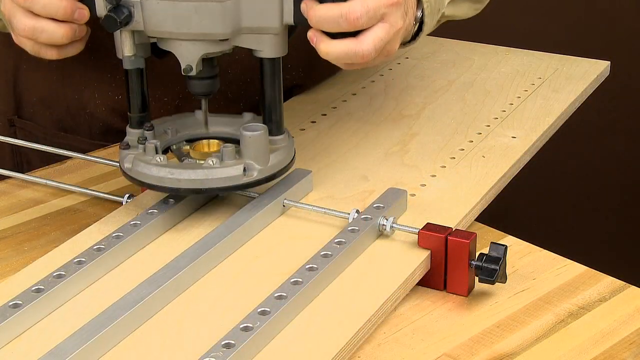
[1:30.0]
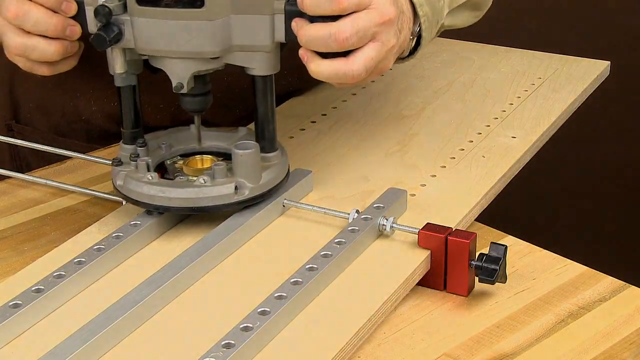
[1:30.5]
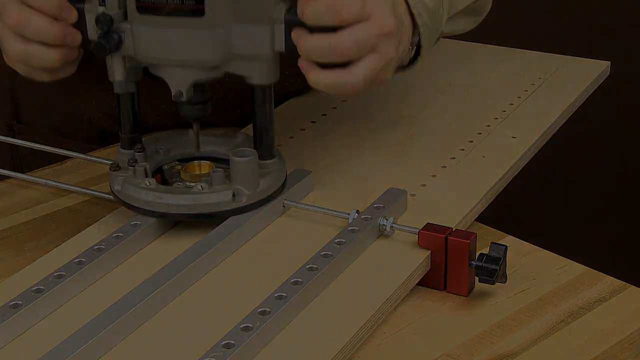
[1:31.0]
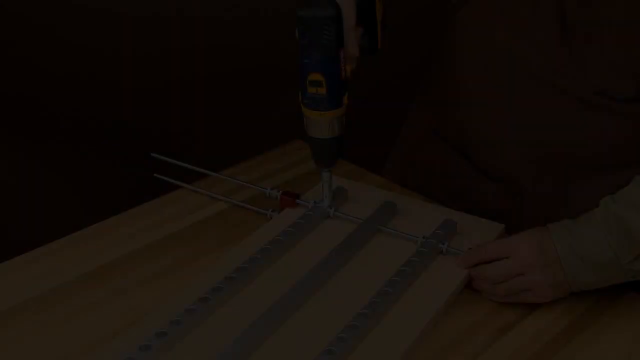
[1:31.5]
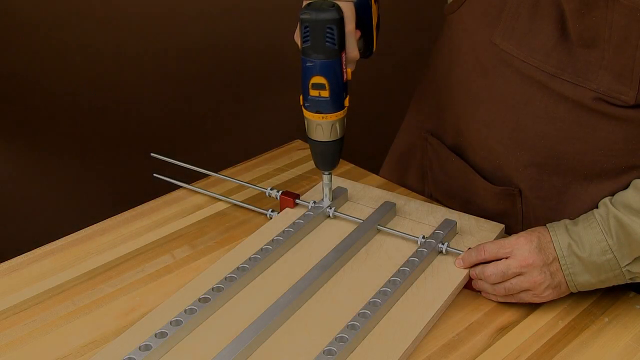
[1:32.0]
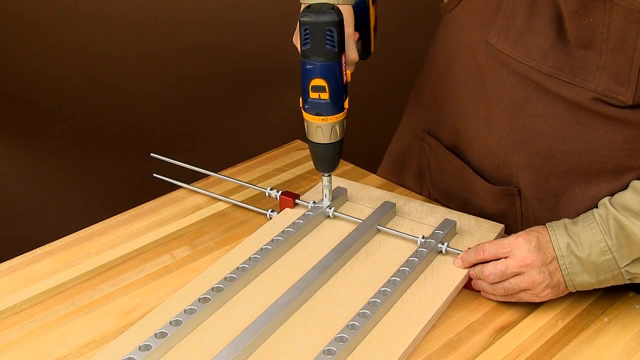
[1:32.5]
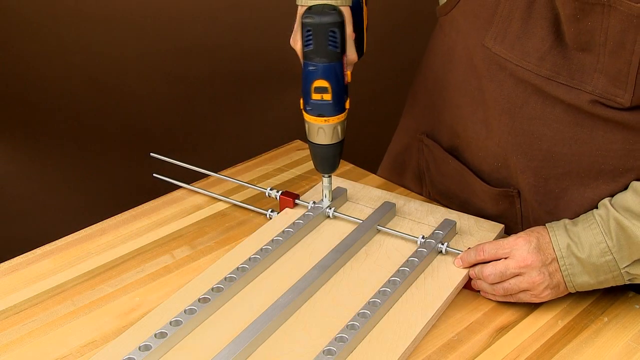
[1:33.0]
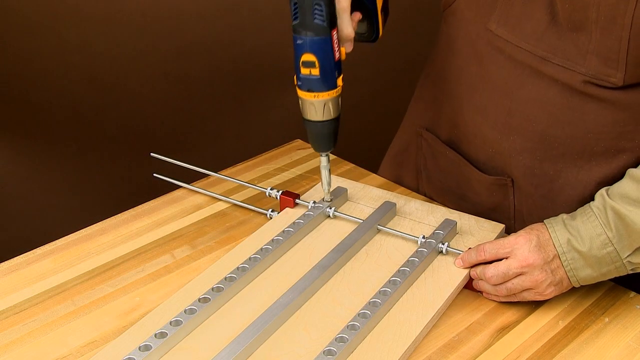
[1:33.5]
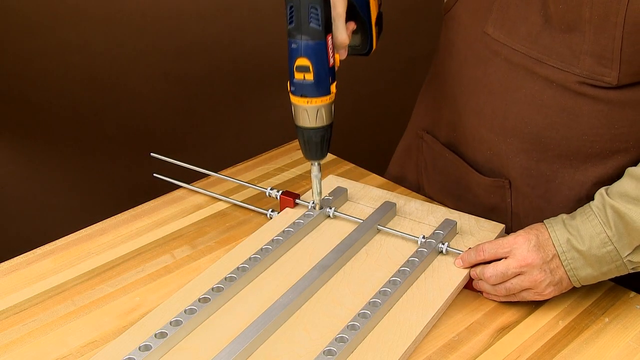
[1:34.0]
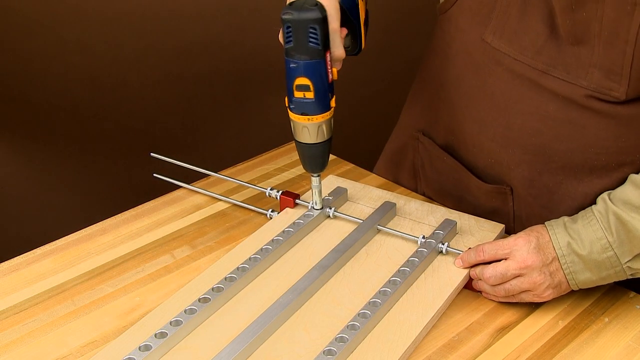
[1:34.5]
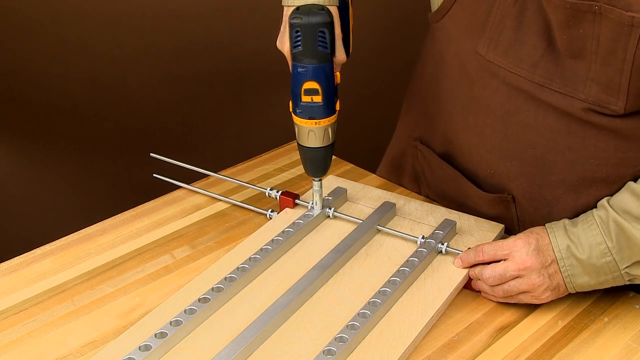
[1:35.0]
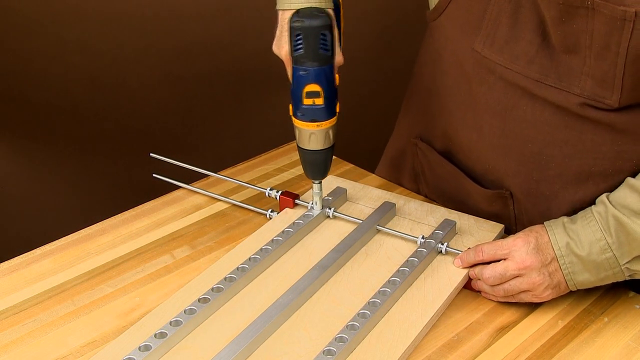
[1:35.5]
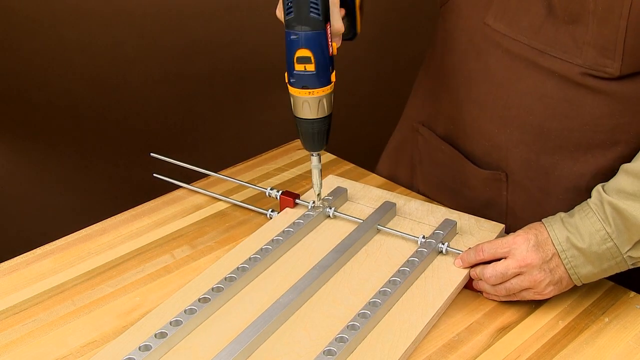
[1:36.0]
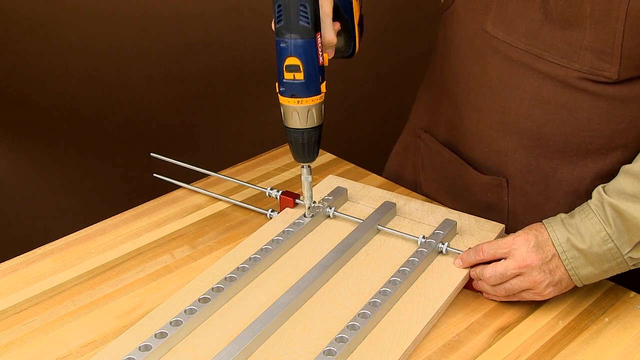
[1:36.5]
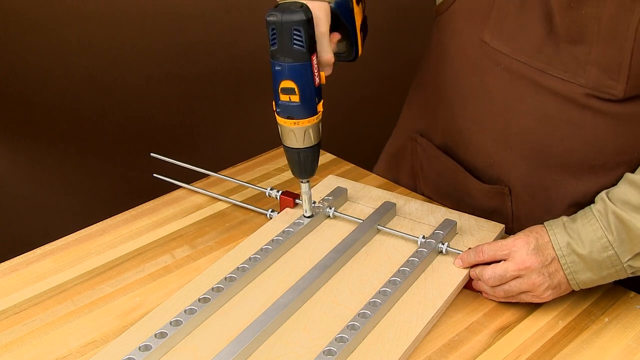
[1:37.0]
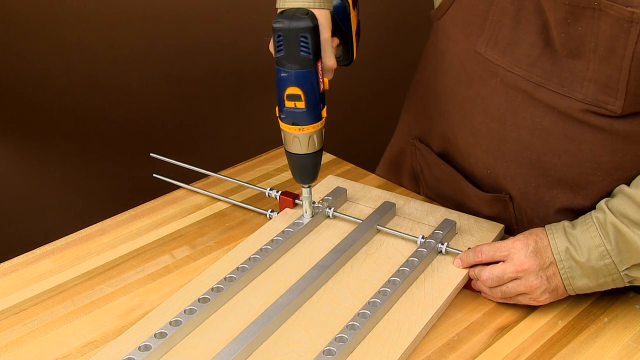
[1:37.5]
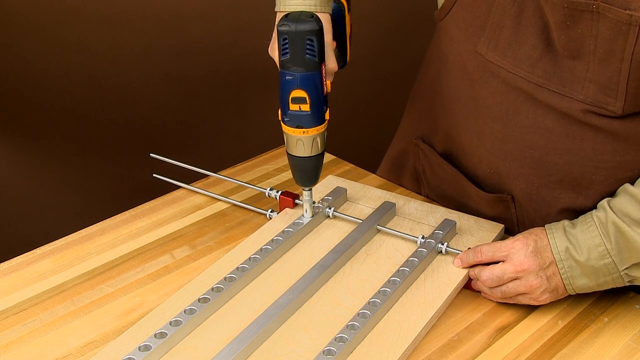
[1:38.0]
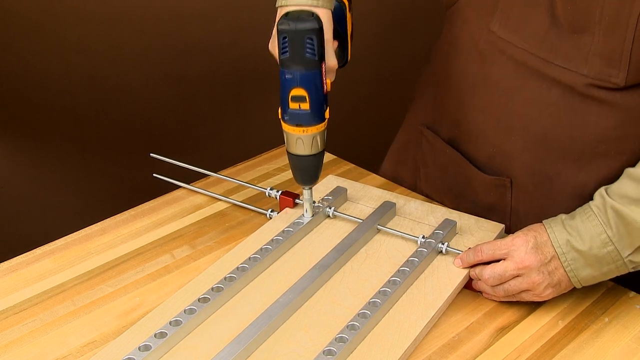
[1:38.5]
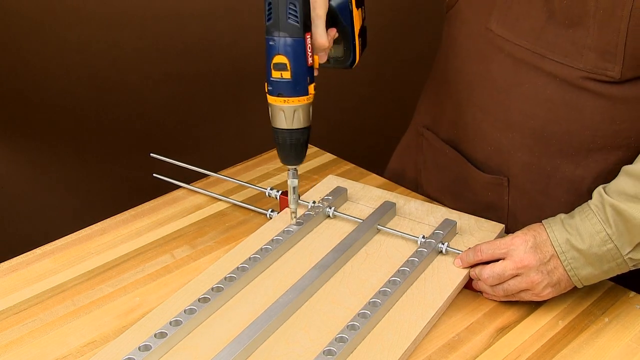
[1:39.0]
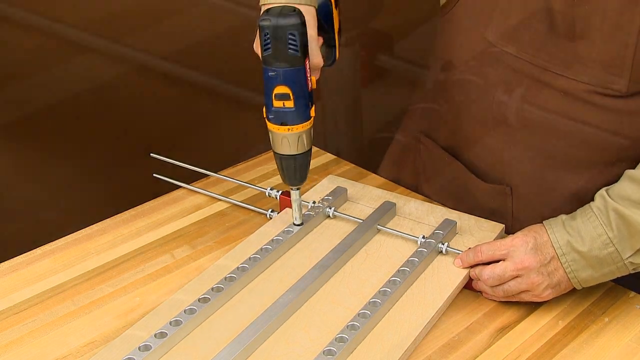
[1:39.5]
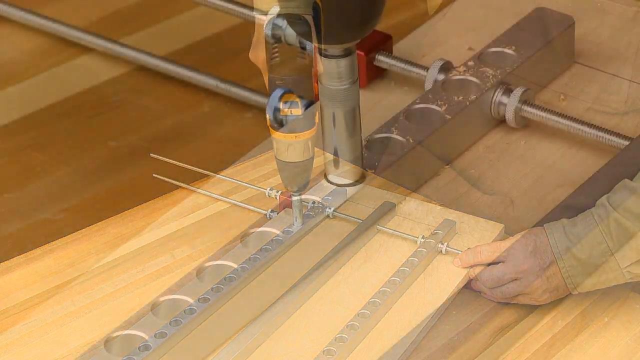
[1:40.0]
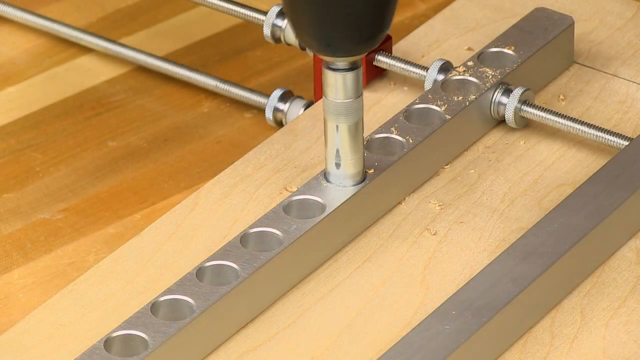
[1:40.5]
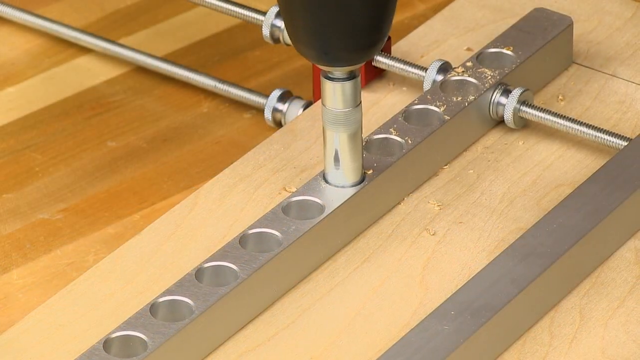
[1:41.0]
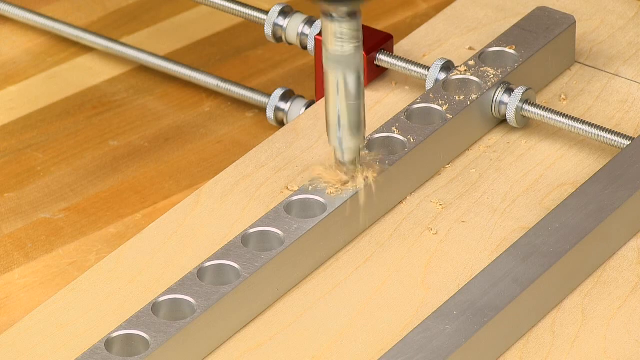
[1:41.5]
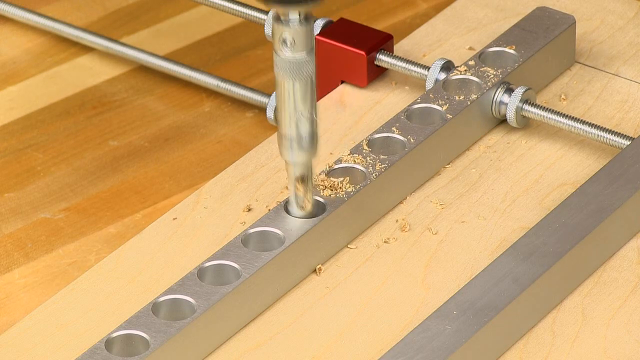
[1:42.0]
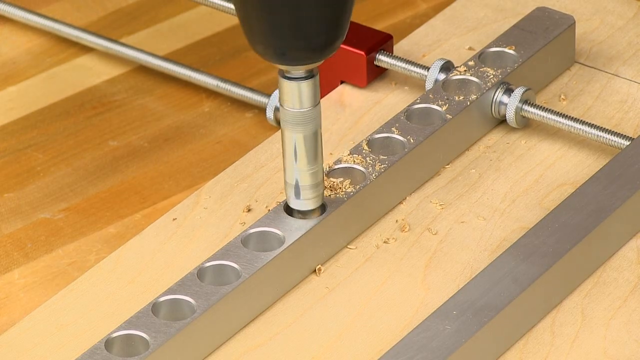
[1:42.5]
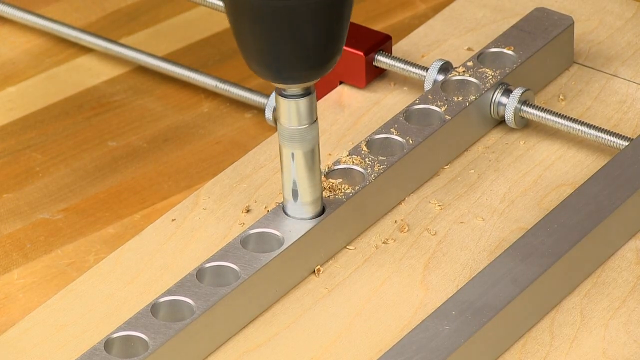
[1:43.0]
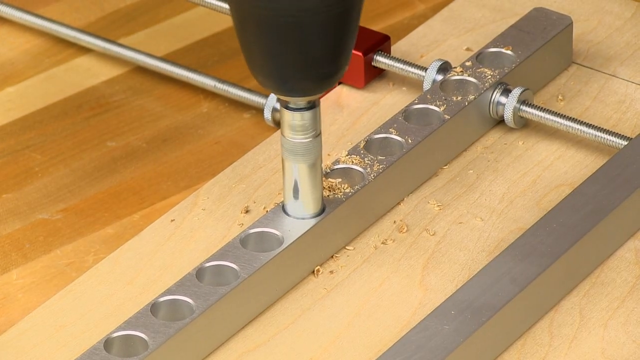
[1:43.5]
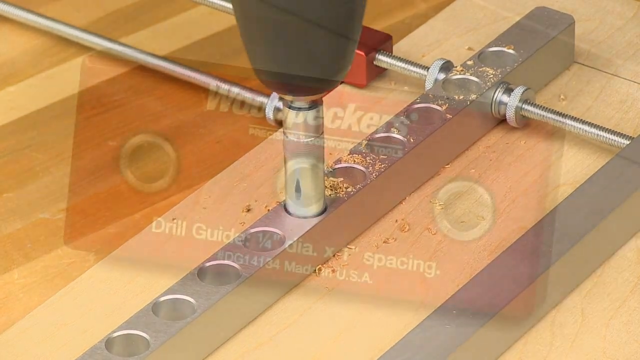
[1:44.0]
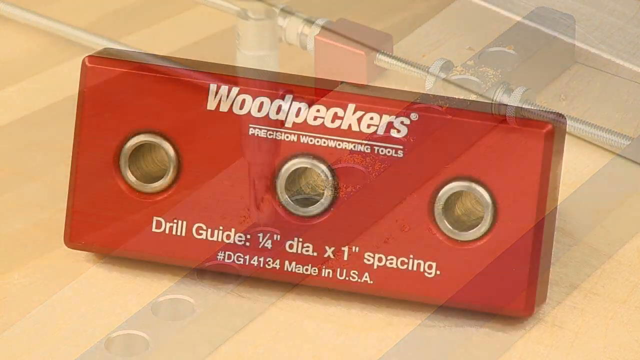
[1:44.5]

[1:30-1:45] The jig is on the wood and the man uses another device: a handheld drill with what looks like a different jig on it, with larger holes, and a larger bit on the drill, making bigger holes. Toward the end, a red guide is shown with "woodpeckers" and "drill guide" on it. Sawdust comes up out of the holes when he pulls the drill back up. This is a handheld drill, different from the press drill; it is the same jig with a different piece on it, and the holes are much bigger. Some text flashes by too fast to read. It is the same man in the same brown apron and green shirt, with the same brown background and wood table.